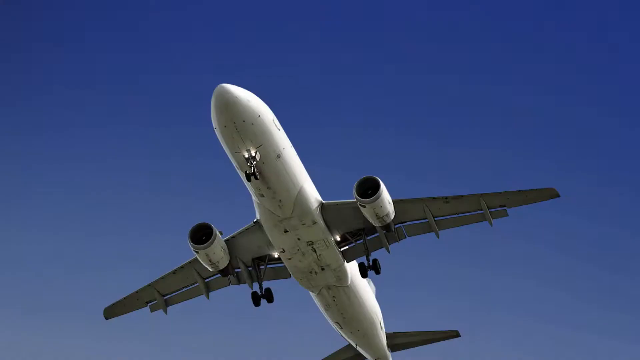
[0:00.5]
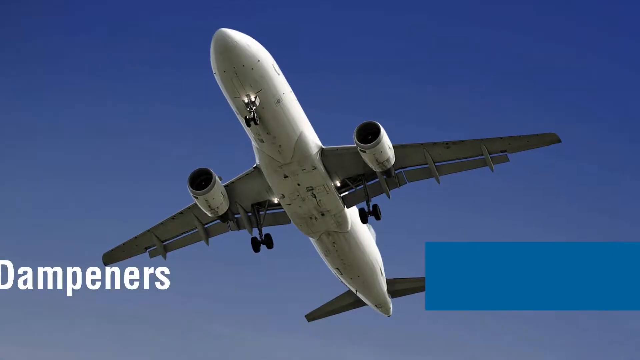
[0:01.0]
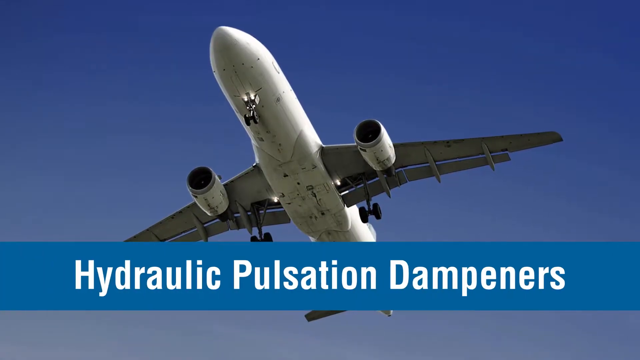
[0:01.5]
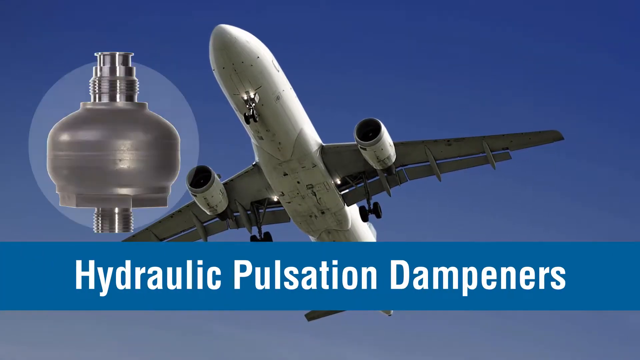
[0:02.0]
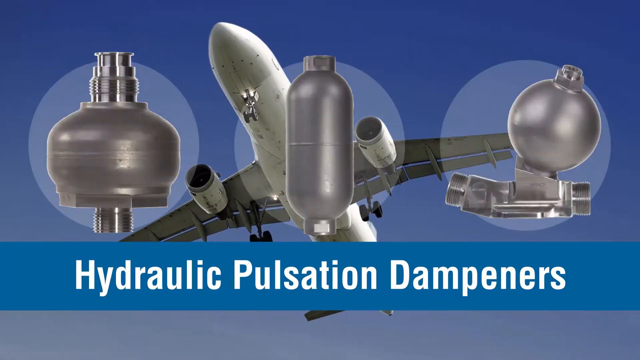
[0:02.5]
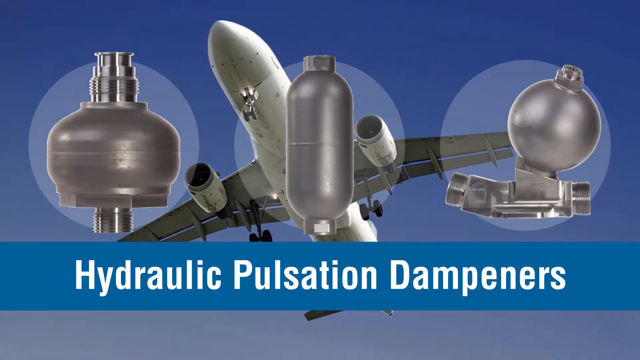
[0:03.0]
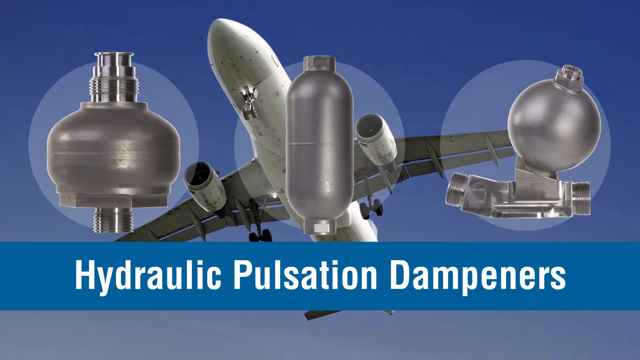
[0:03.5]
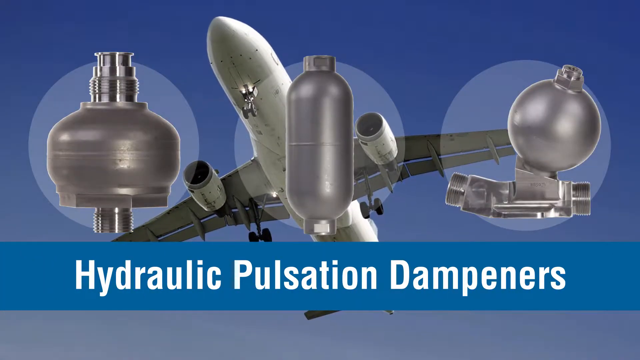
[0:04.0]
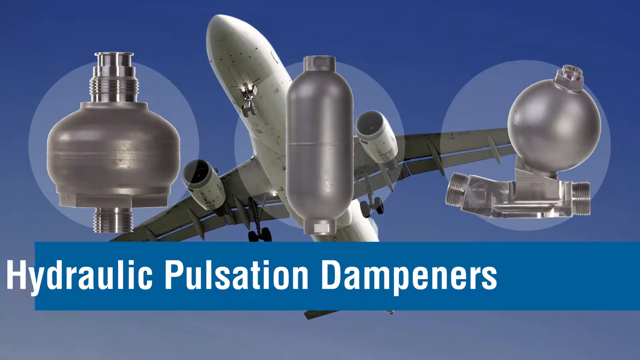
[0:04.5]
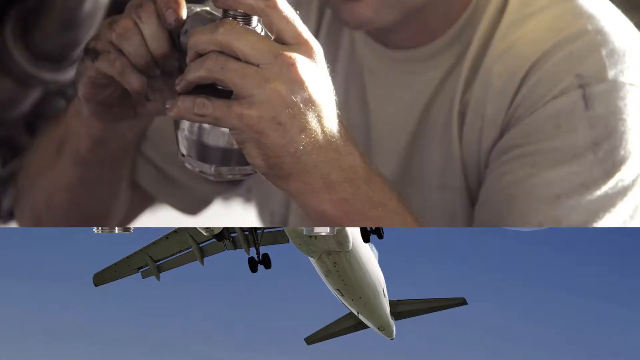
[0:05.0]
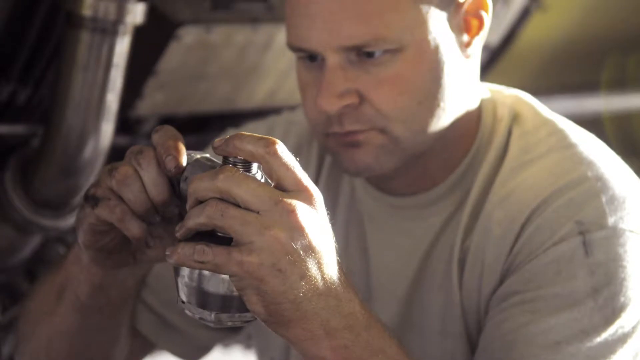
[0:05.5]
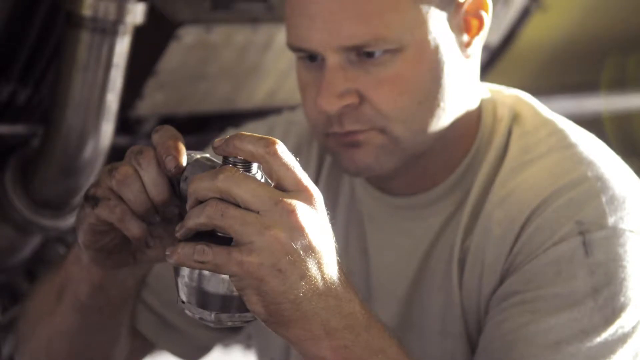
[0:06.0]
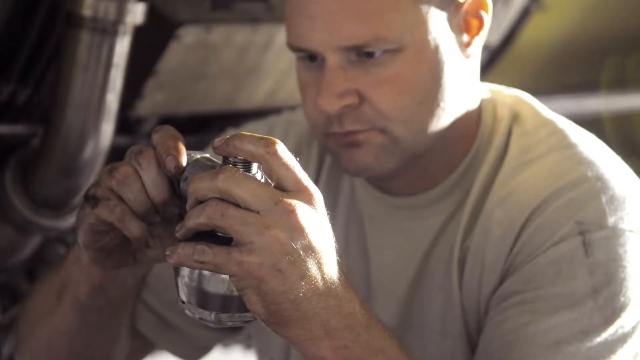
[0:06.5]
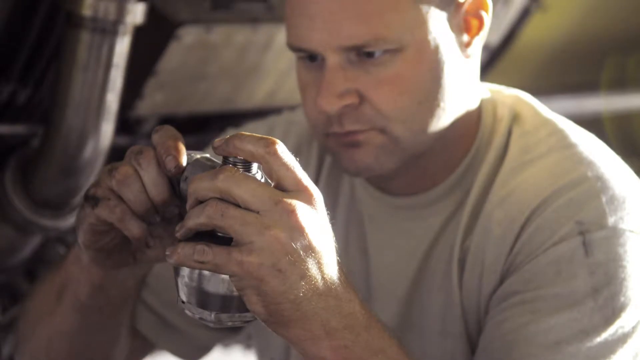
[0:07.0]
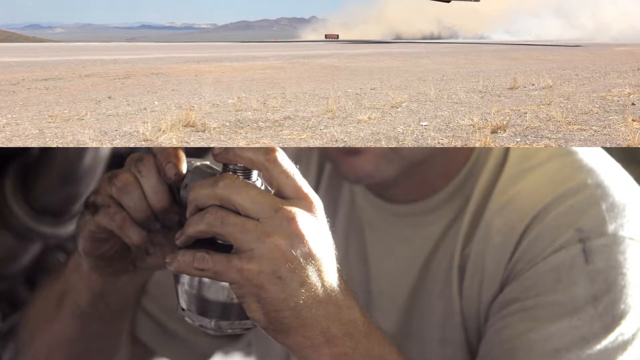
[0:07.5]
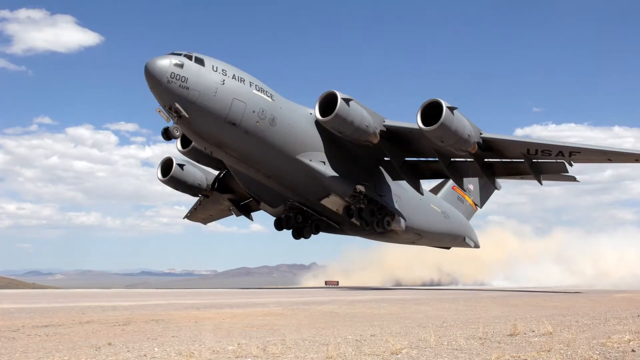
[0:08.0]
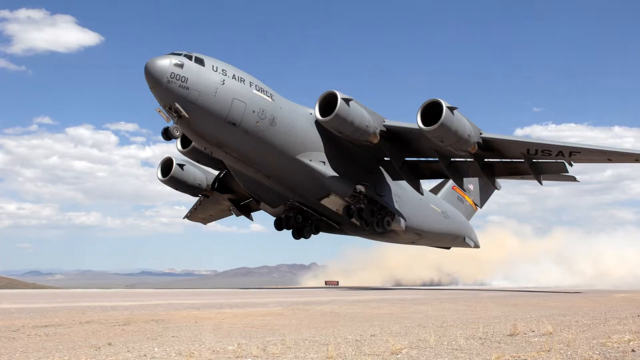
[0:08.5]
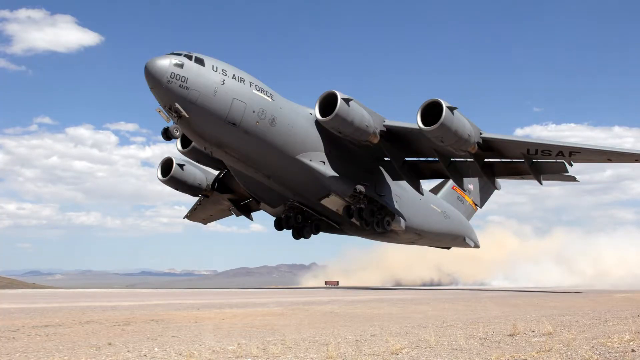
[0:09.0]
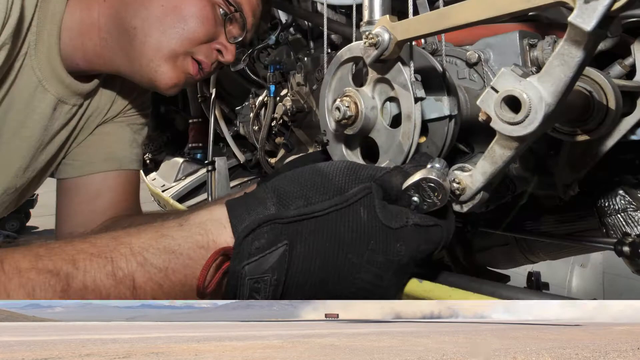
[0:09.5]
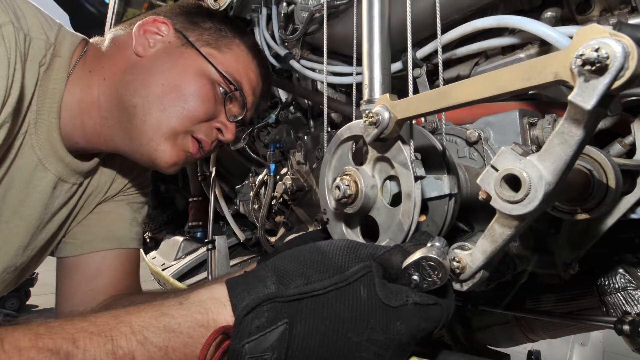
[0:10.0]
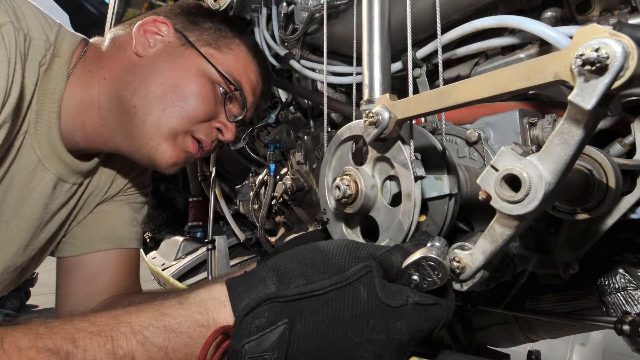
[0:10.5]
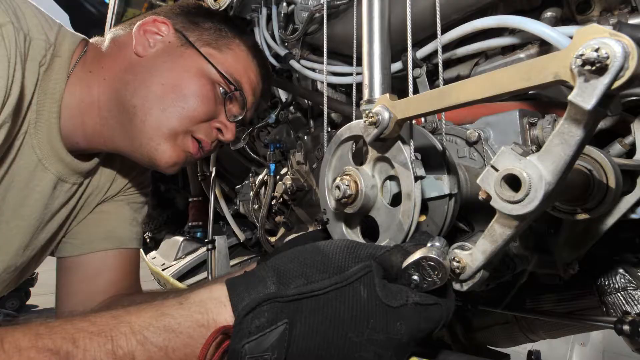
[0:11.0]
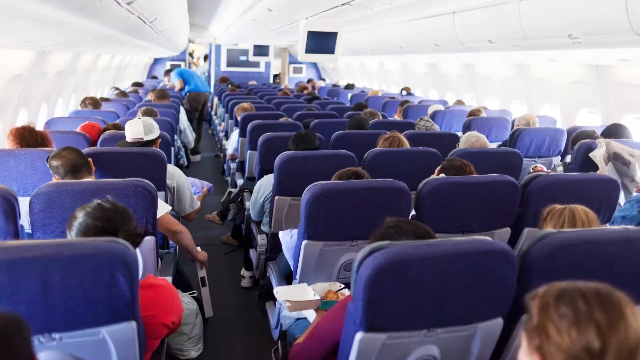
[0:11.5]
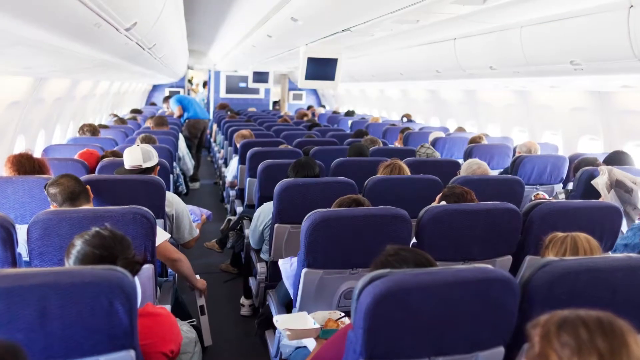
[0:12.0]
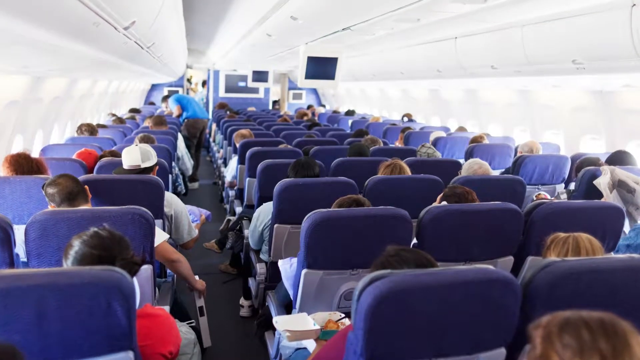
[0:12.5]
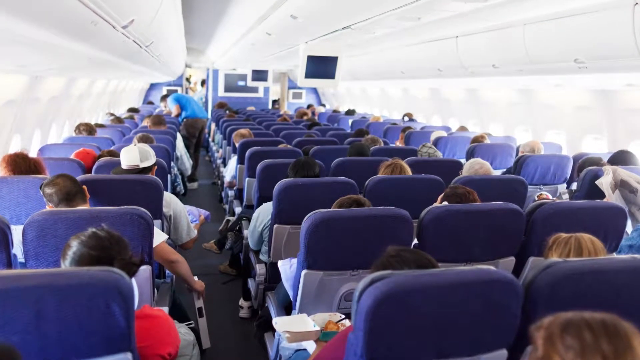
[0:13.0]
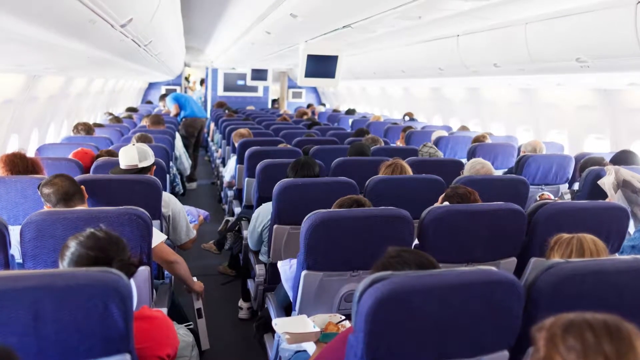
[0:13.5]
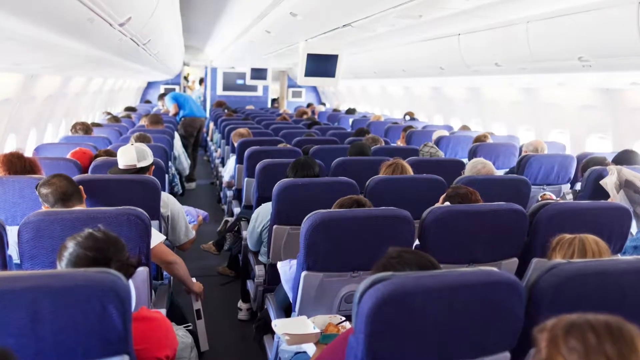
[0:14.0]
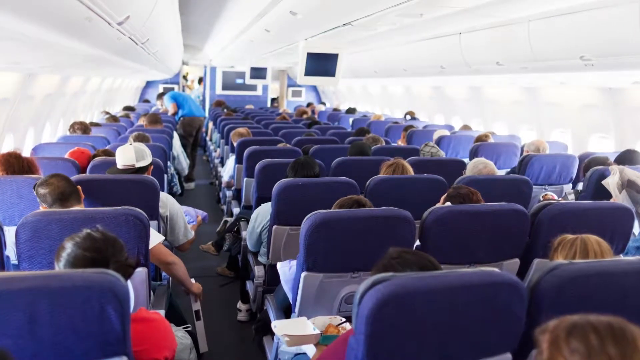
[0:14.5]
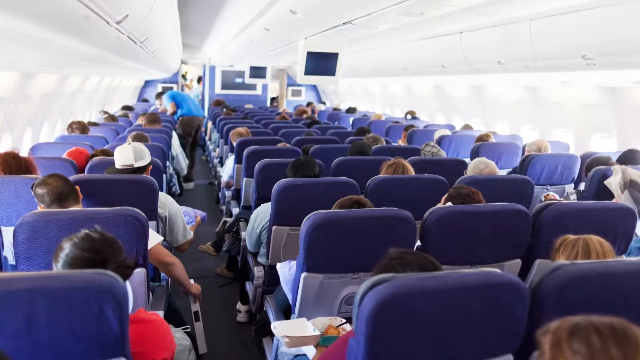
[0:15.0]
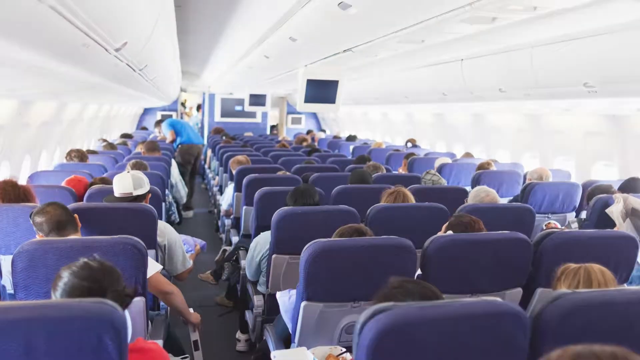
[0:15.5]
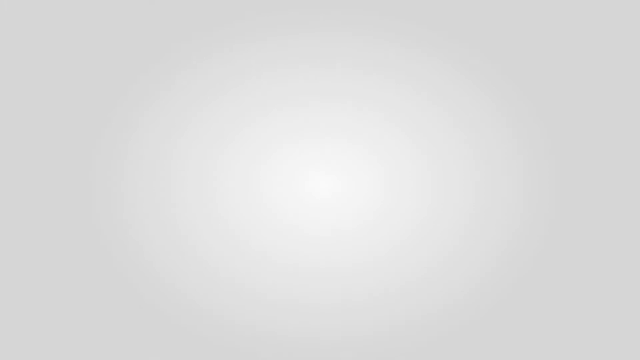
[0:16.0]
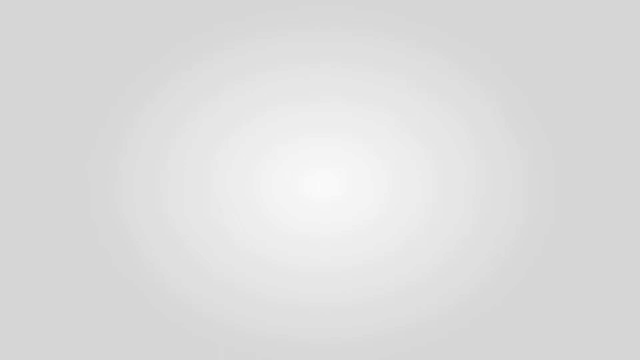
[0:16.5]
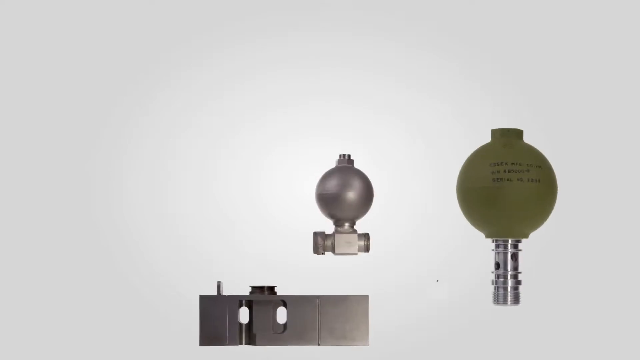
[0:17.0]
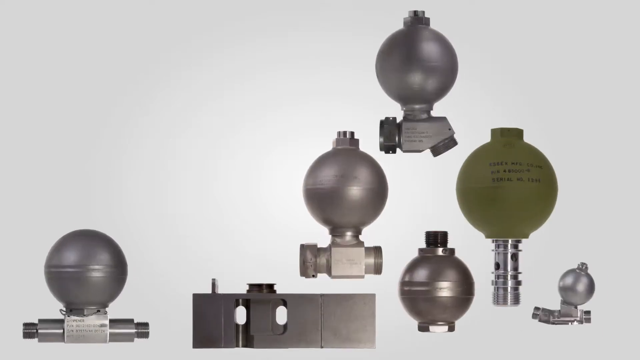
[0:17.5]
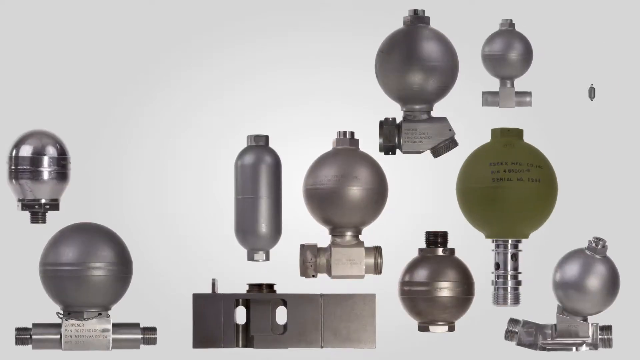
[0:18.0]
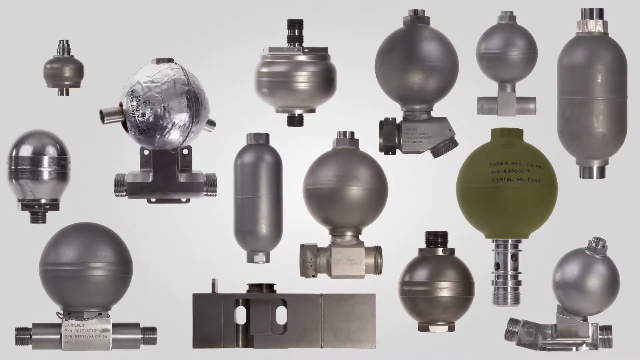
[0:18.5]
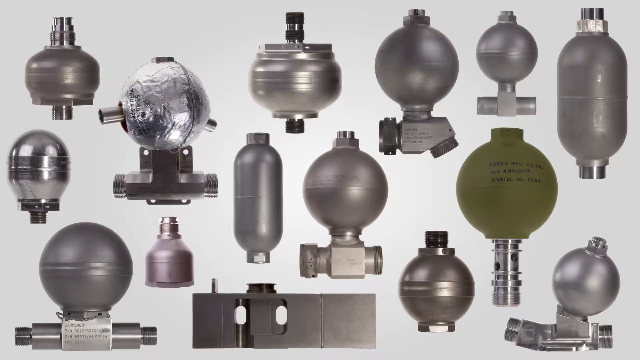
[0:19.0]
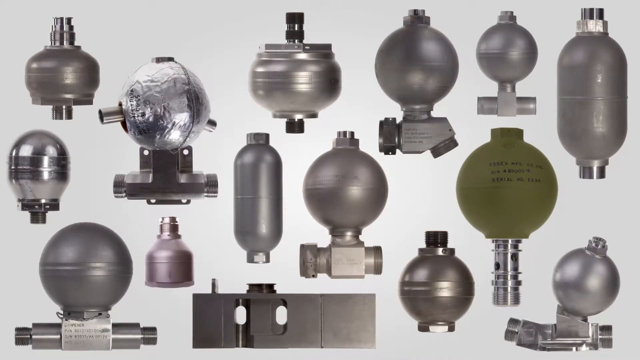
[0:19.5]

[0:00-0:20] The words "hydraulic pulsation dampeners" appear, followed by a quick picture of an airplane and three silver things that look like the hydraulic pulsation dampeners; the image looks like an AI, computer-generated picture. Next is a picture of a man, presumably using this pulsation dampener; he is white and his hands are dirty. Then a gray US Air Force plane takes off in a desert location, with dirt blowing behind the plane. A white man wearing black gloves and glasses fixes some sort of machine. People are shown sitting on a large airplane with three columns of blue seats during the daytime. A quick picture of the hydraulic pulsation dampeners follows.